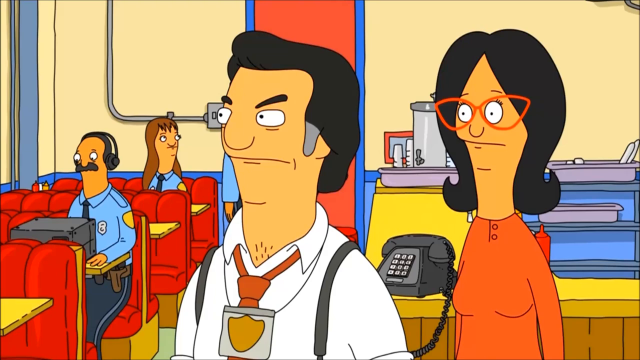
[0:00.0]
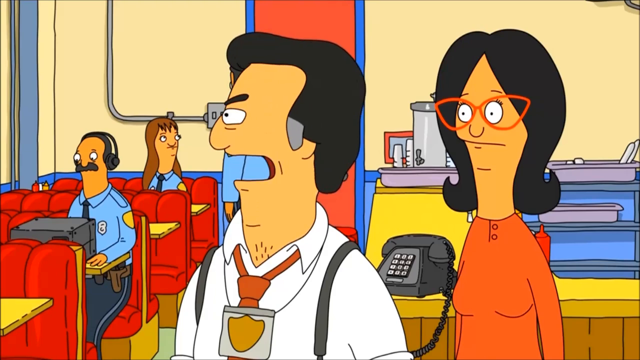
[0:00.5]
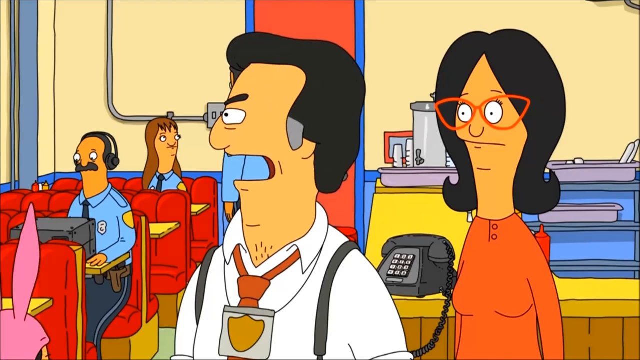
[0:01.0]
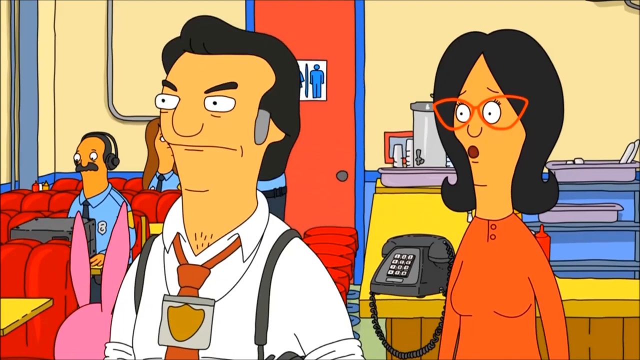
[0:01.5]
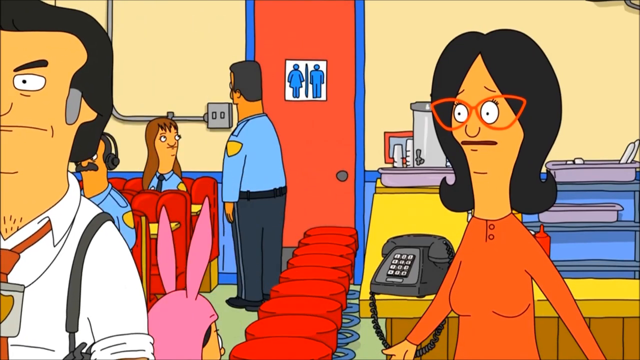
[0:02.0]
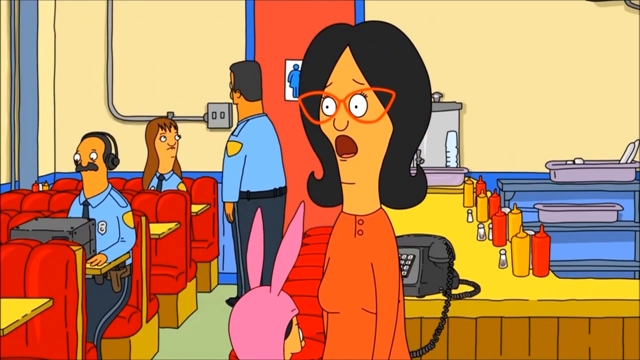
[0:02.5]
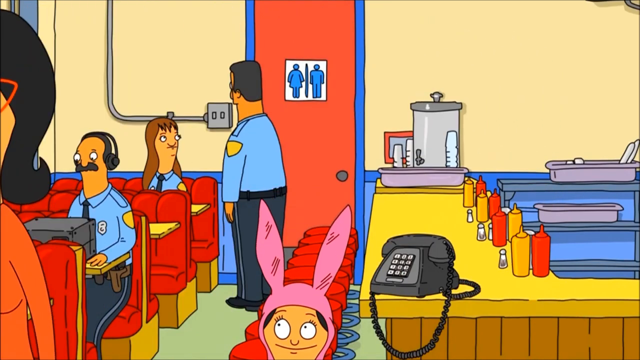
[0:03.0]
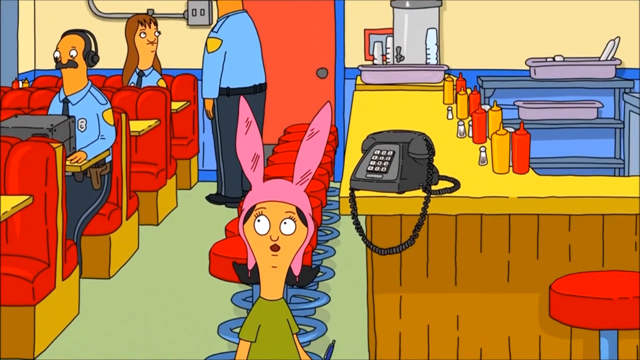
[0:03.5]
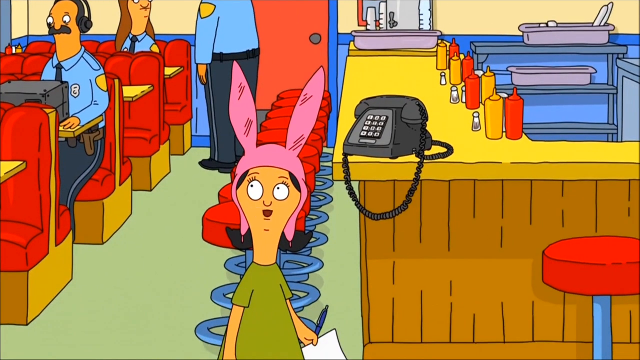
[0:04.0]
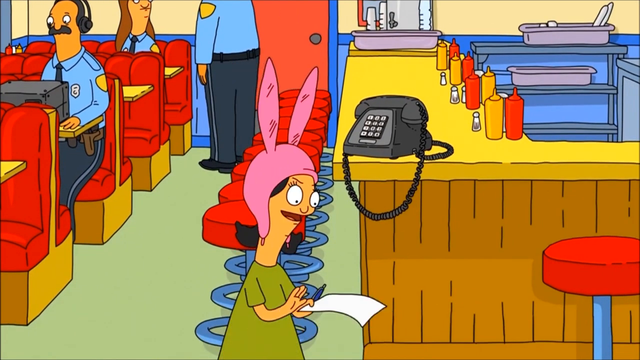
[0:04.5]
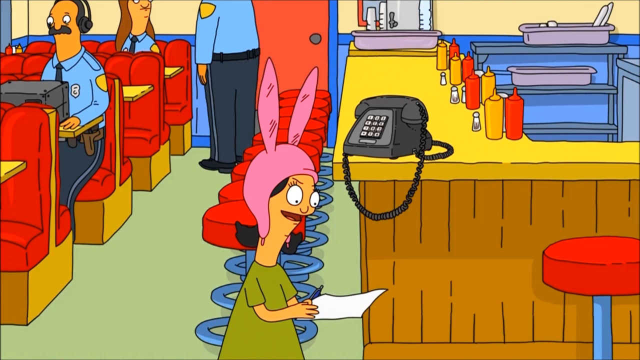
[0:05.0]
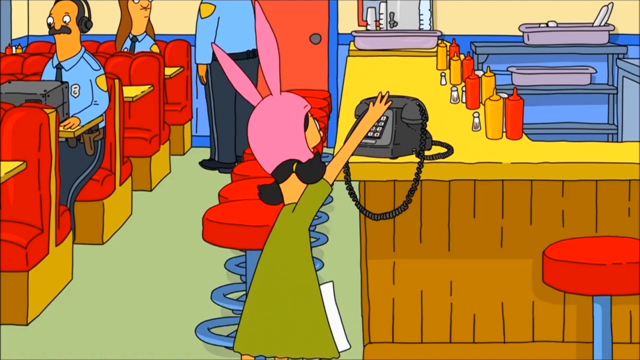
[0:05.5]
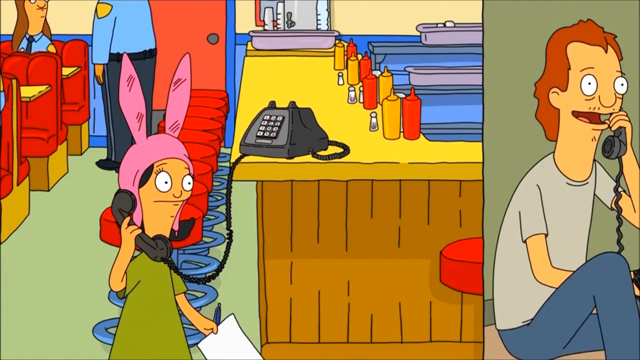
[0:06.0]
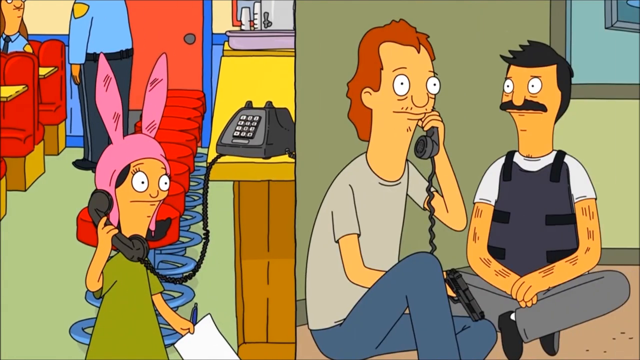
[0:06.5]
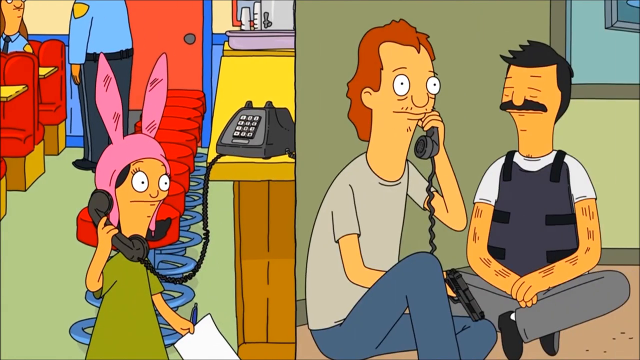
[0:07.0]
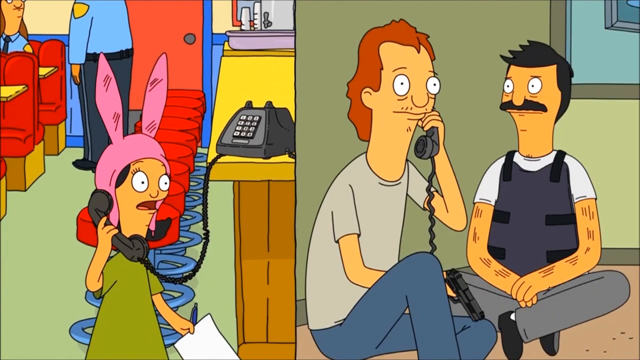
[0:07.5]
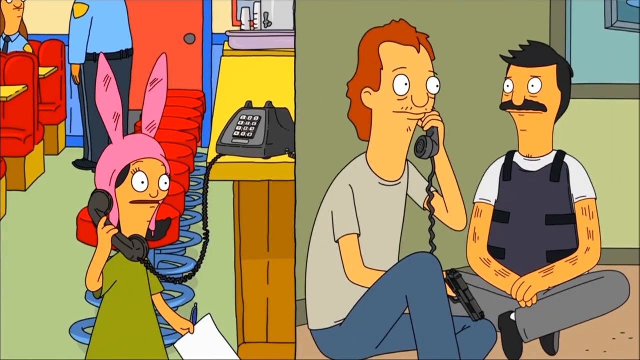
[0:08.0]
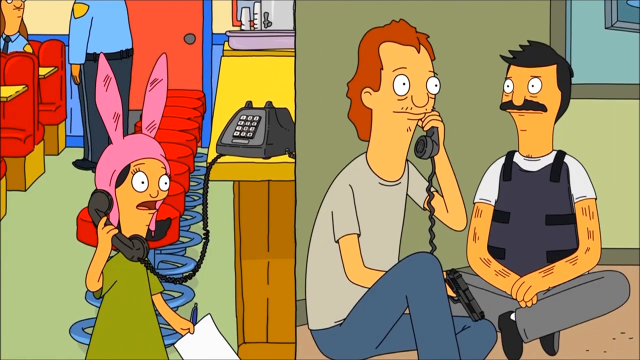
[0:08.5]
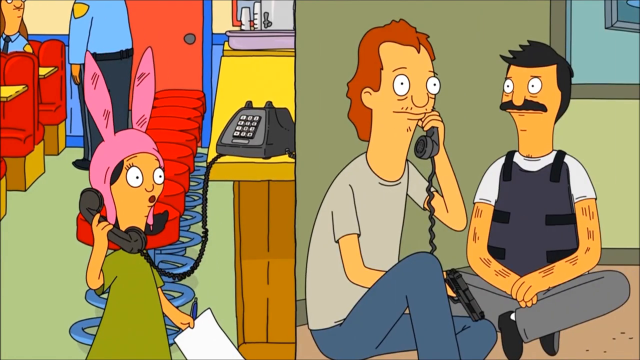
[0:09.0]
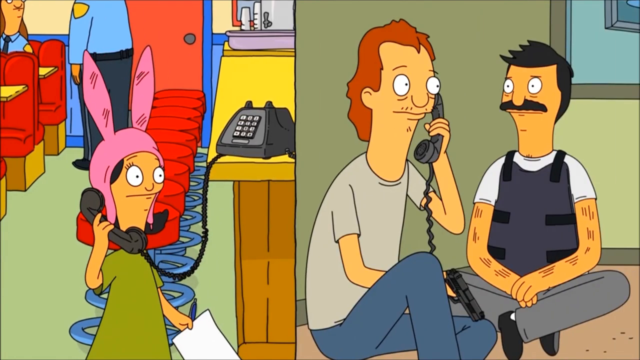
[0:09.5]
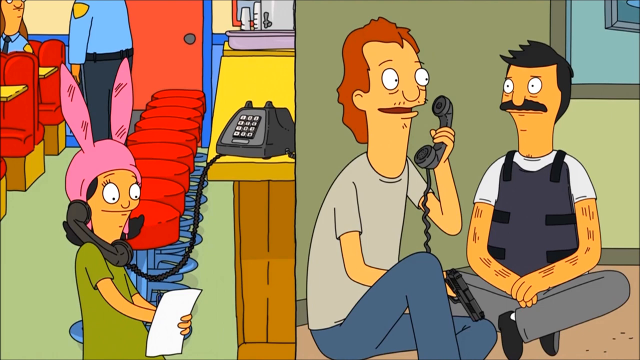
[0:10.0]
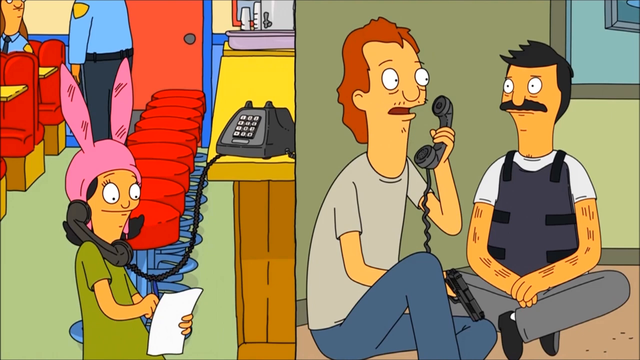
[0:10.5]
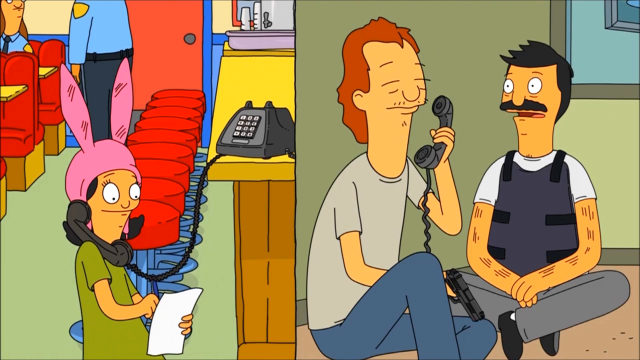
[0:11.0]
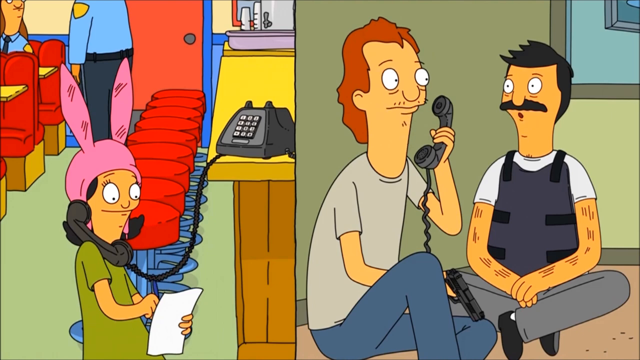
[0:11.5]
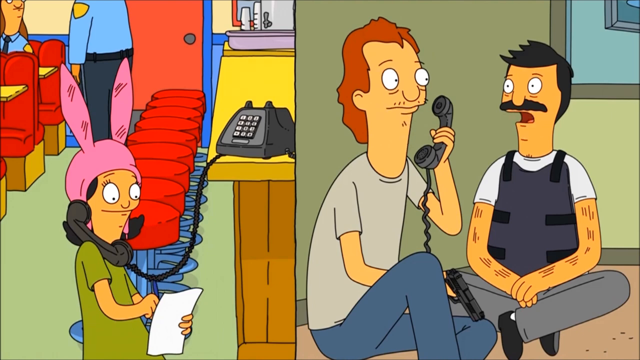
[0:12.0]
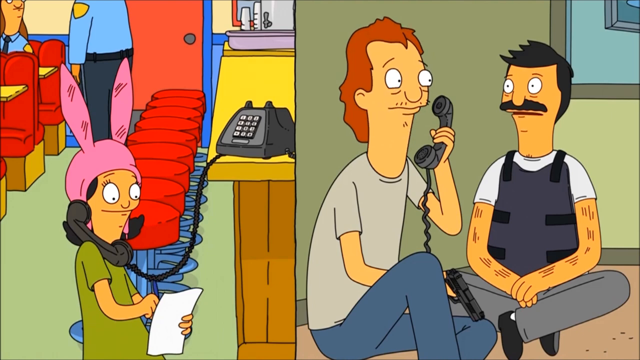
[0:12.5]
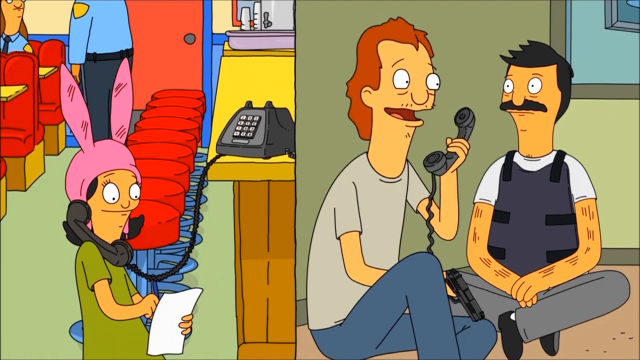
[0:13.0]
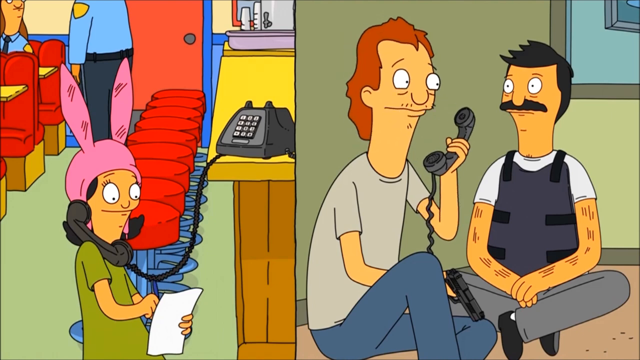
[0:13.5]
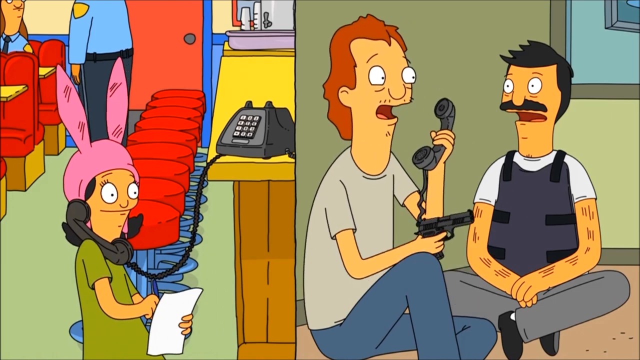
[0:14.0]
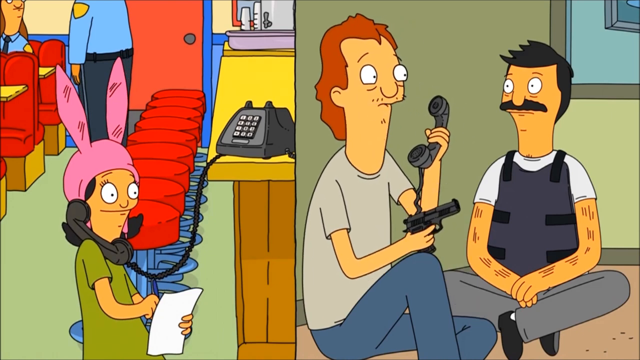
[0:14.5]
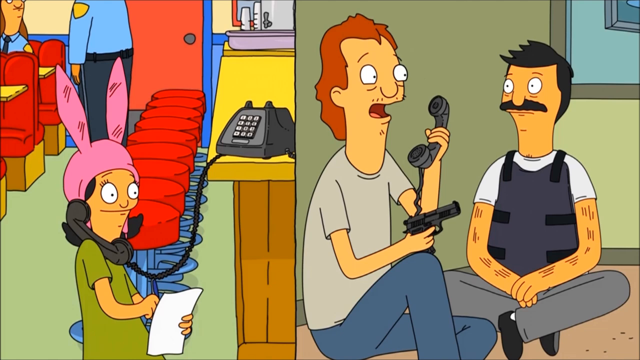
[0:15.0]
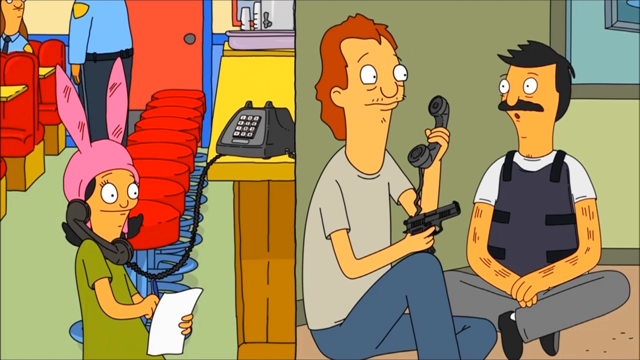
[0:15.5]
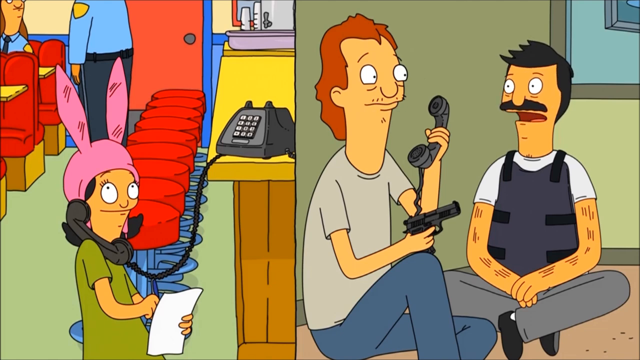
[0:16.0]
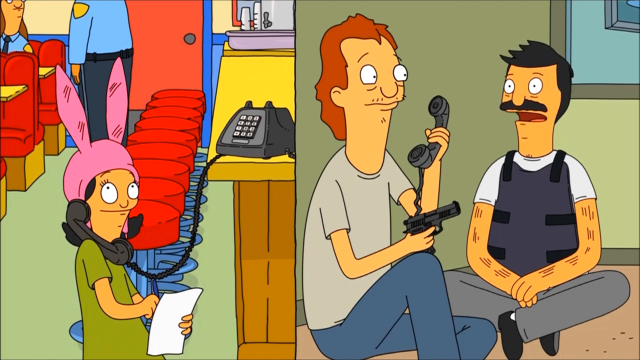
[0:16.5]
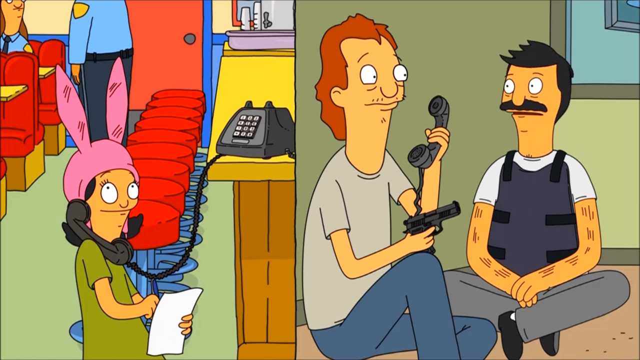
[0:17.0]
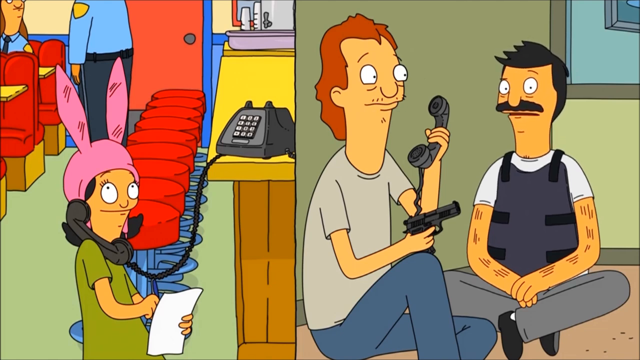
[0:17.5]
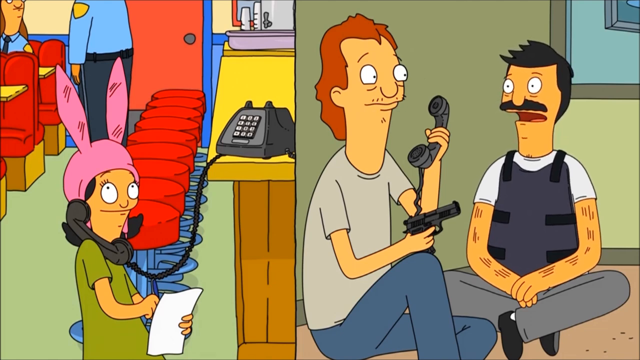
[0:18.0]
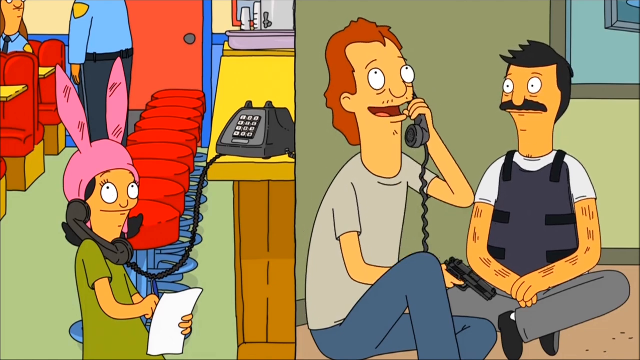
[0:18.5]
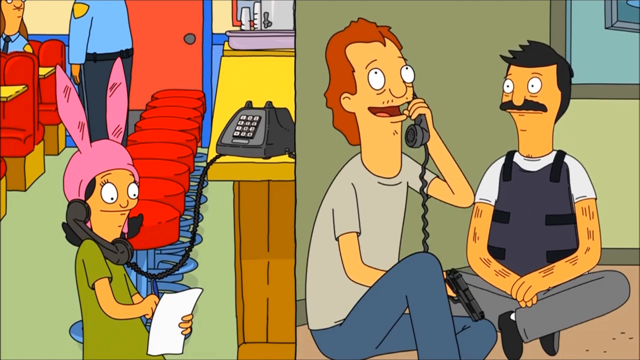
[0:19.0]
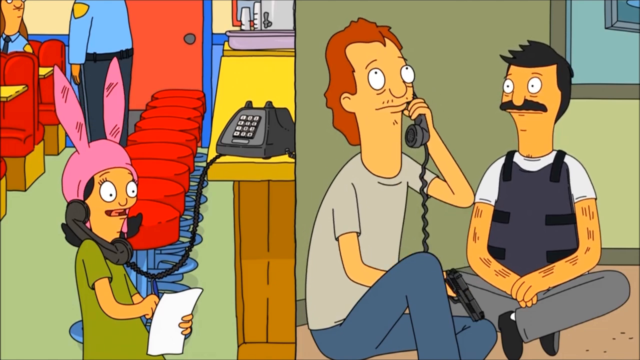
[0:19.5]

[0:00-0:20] A cartoon begins with what looks like a couple walking by. A child wearing a bunny-looking hat comes in; she is on the phone with two guys, one of whom looks like he may be a cop and the other of whom is holding a gun. In the background behind the girl there appears to be a bunch of cops. She takes notes while talking to the person with the gun. The other person on the line has what looks like a bulletproof vest on. The girl is apparently in some kind of diner, with a bunch of bar chairs, a counter, and some booths where the police officers are sitting. The two people who seemed to be a couple may not be a couple: one of them is apparently a detective of some sort, and the other is probably helping him or was a witness to whatever crime happened.